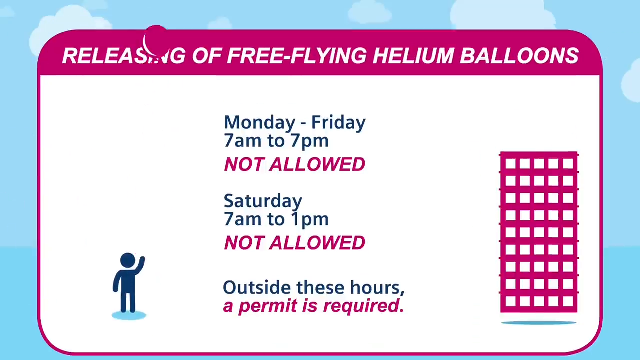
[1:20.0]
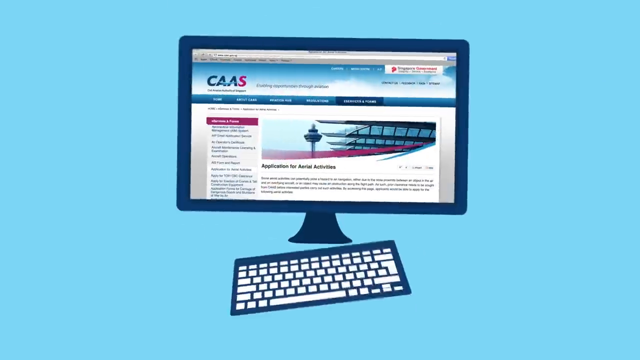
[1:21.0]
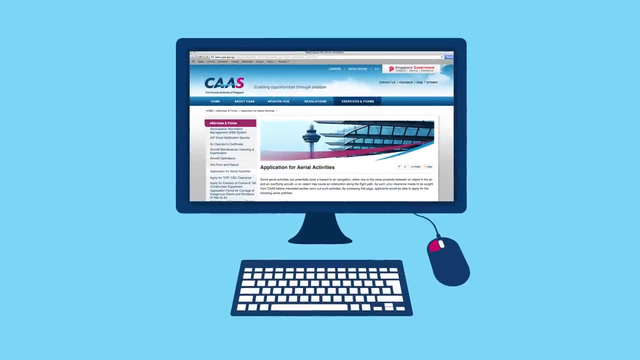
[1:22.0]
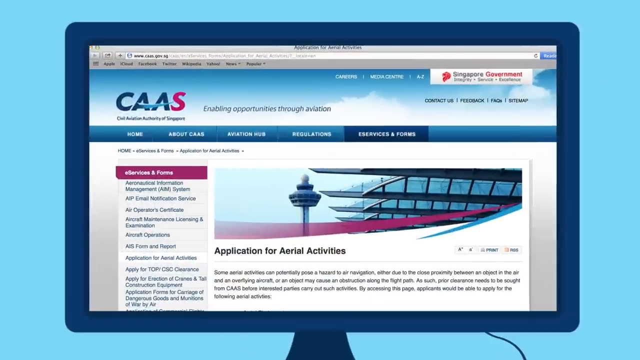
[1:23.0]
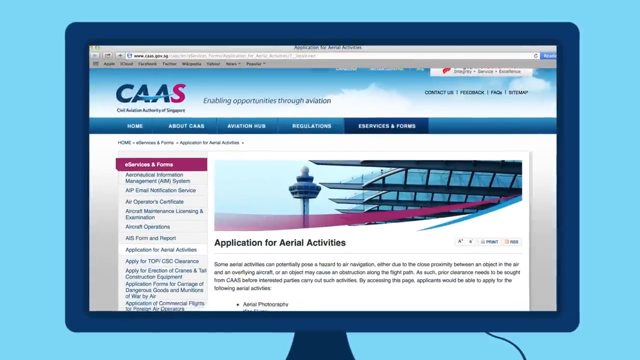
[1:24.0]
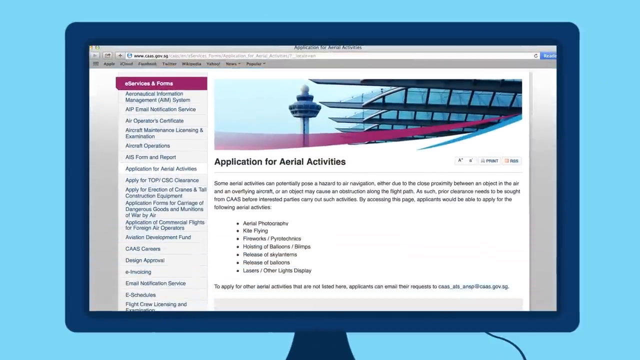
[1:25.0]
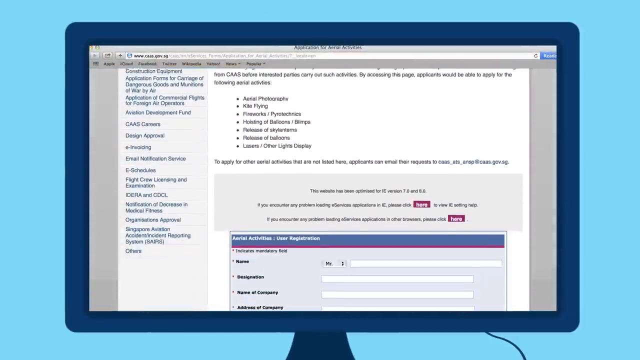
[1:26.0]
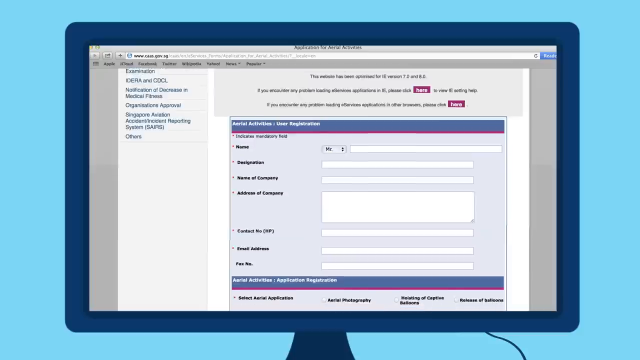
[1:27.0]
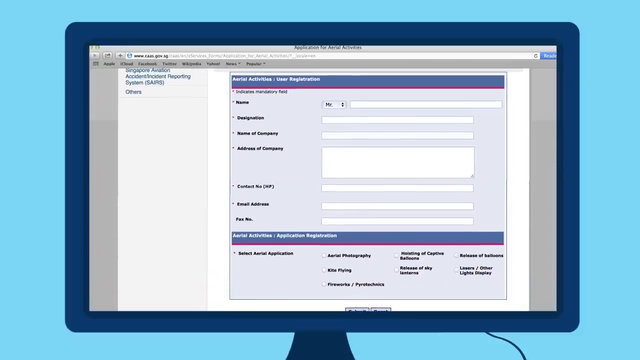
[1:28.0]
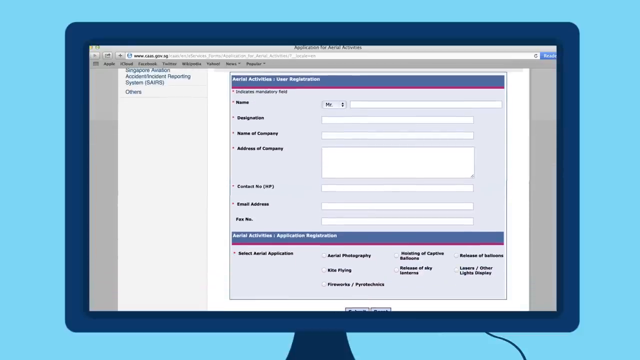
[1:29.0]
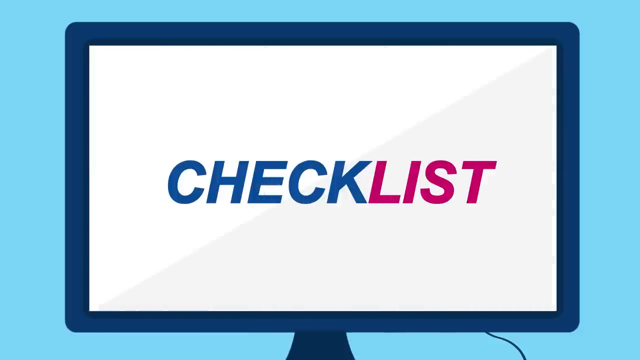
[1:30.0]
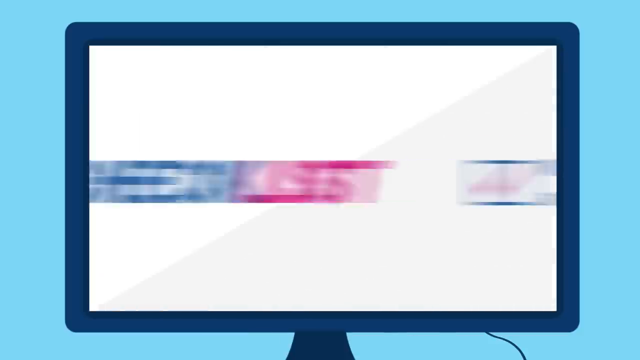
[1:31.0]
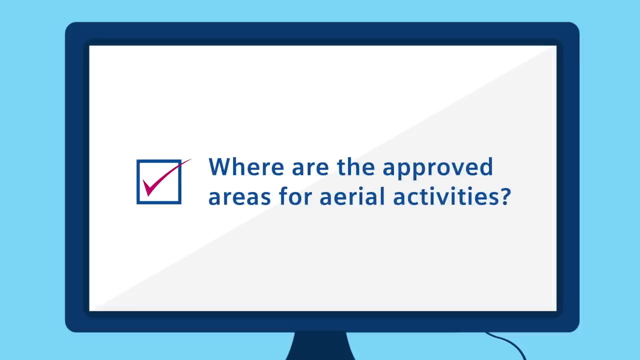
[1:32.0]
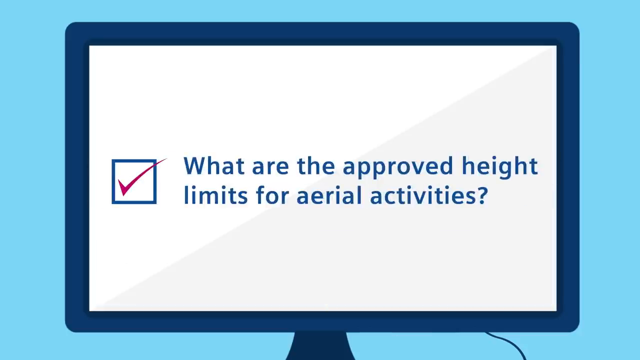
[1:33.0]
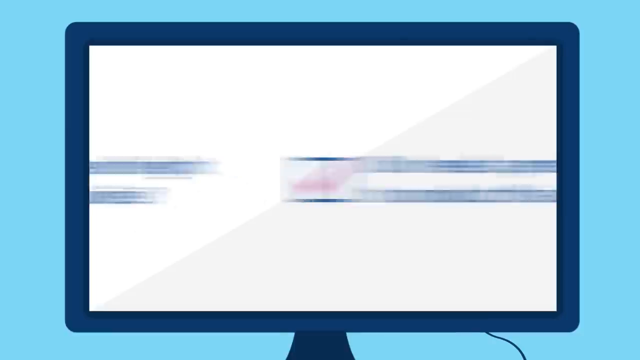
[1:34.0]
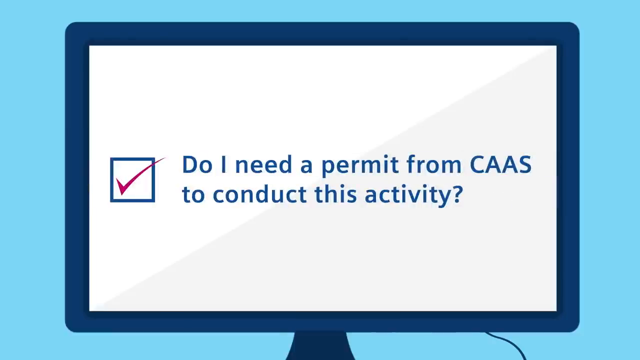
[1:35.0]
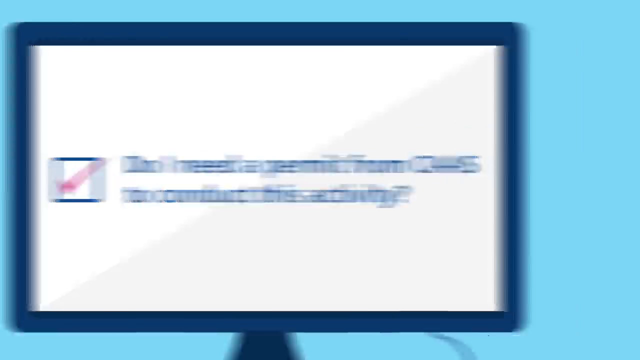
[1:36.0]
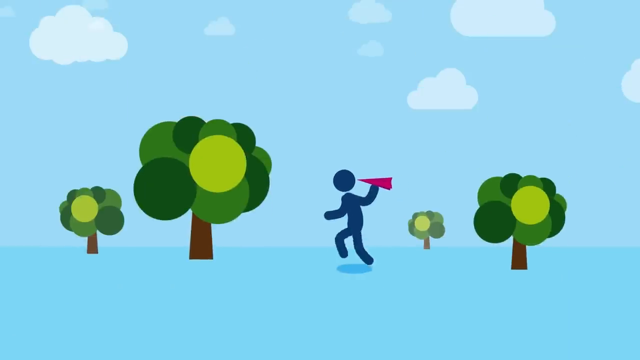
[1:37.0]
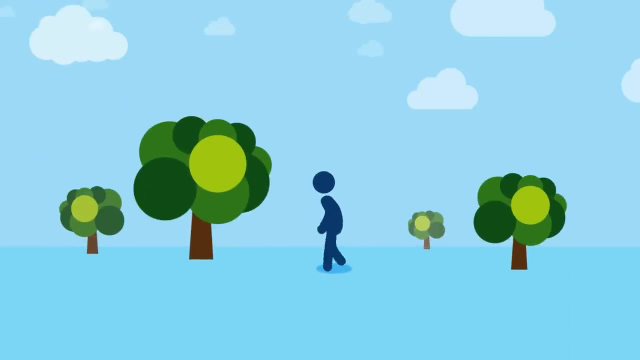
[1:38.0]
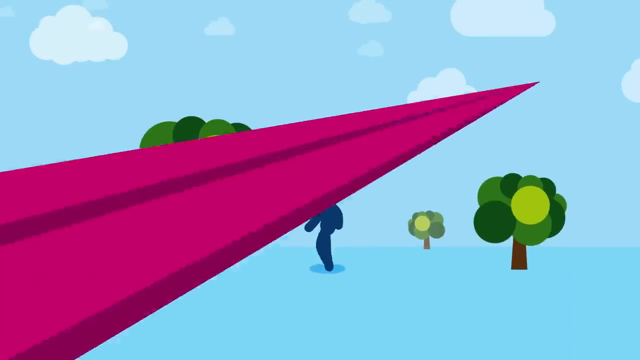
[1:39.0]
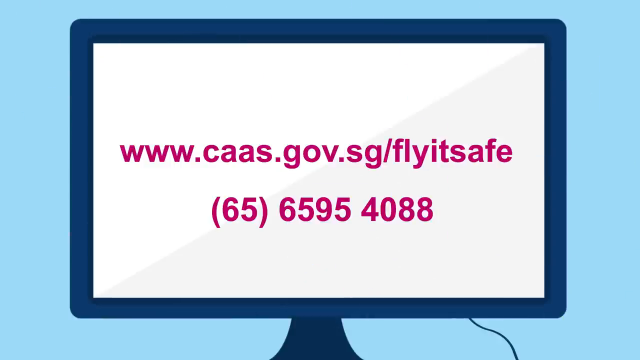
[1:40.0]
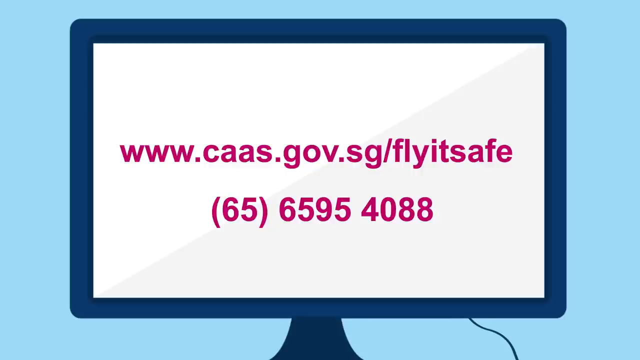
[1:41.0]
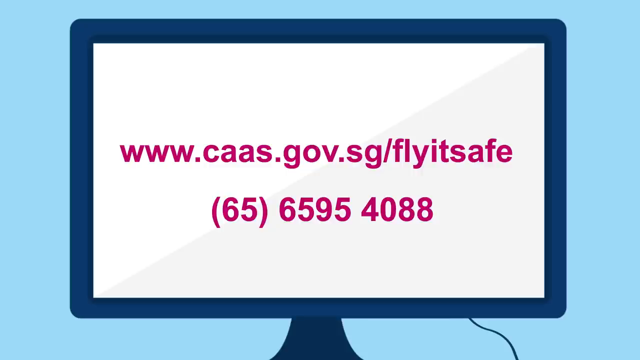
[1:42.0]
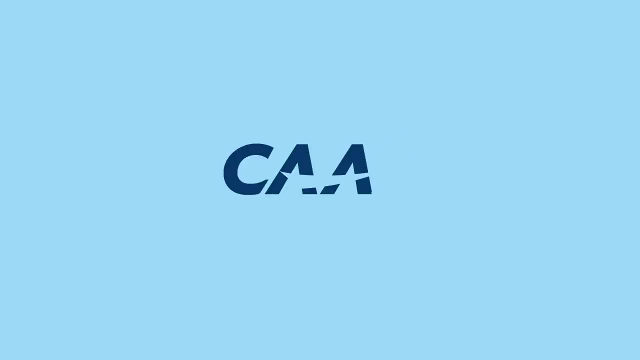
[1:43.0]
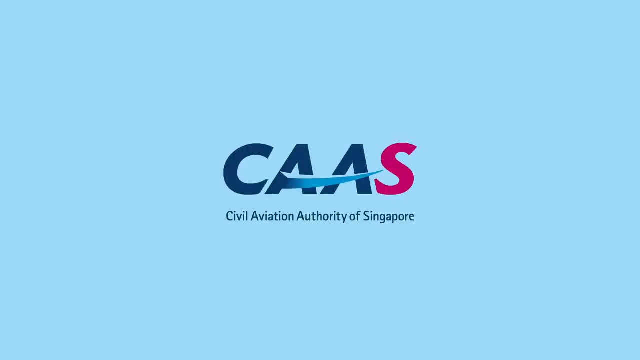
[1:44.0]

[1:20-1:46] The section on balloons is shown, and then a computer appears displaying a website called CAAS with the text "enabling opportunities through aviation" and a place to sign up. Next the word "checklist" appears, with a few questions shown on the screen with check marks, such as "What are the approved height limits for aerial" and "Do I need a permit from CAAS?" A paper kite flies across the screen to reveal a message. At the end, a boy throws a pink paper airplane into the sky, with four trees visible, and the website address www.caas is shown.